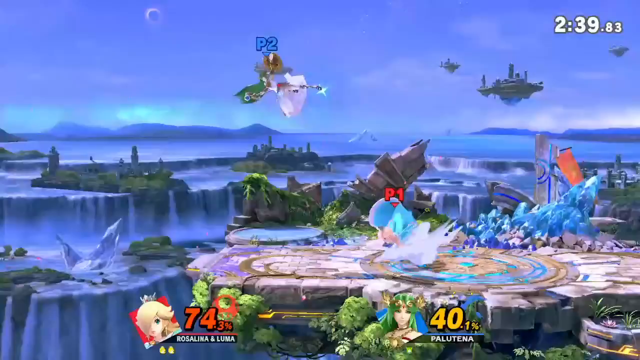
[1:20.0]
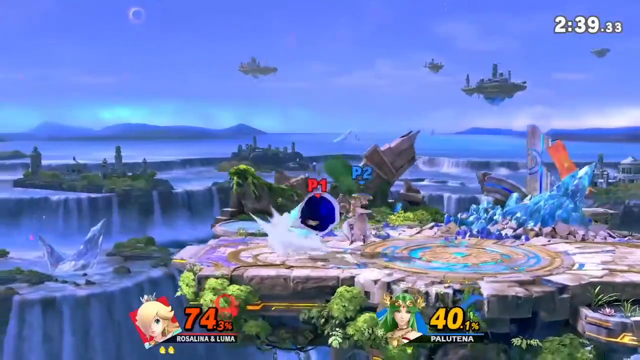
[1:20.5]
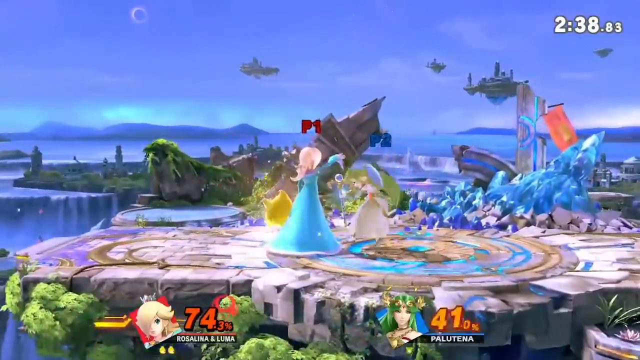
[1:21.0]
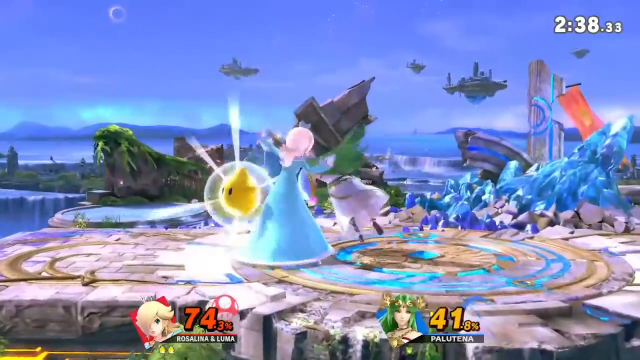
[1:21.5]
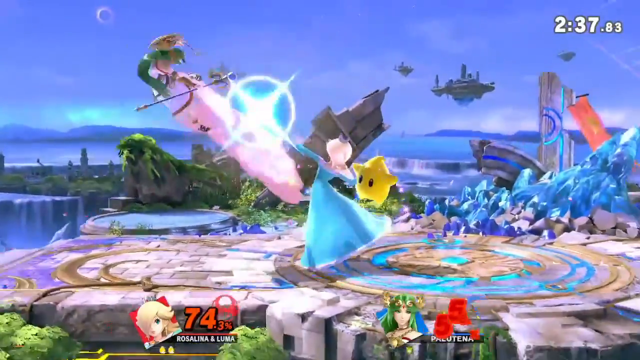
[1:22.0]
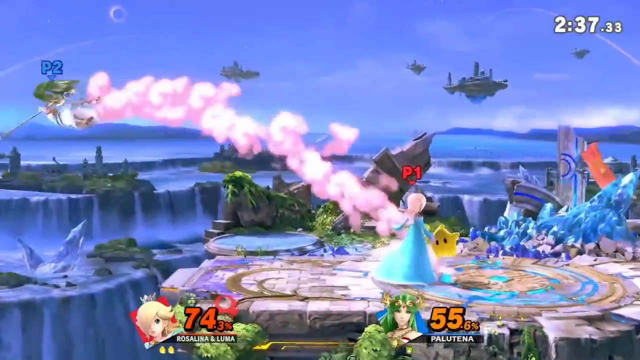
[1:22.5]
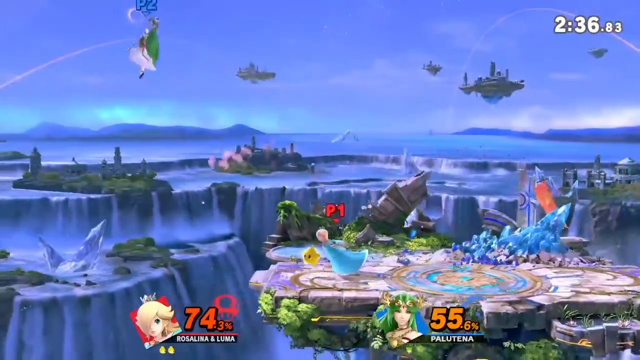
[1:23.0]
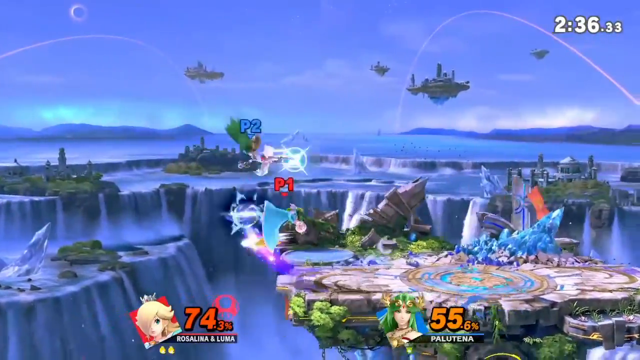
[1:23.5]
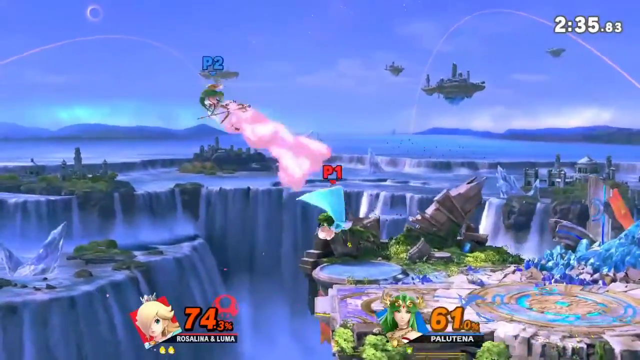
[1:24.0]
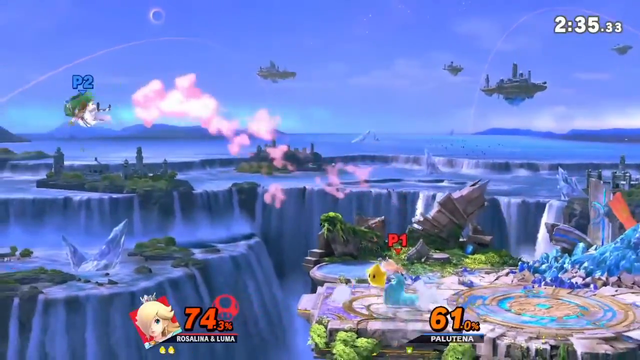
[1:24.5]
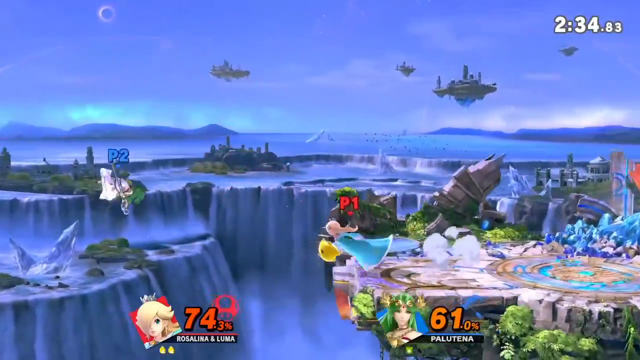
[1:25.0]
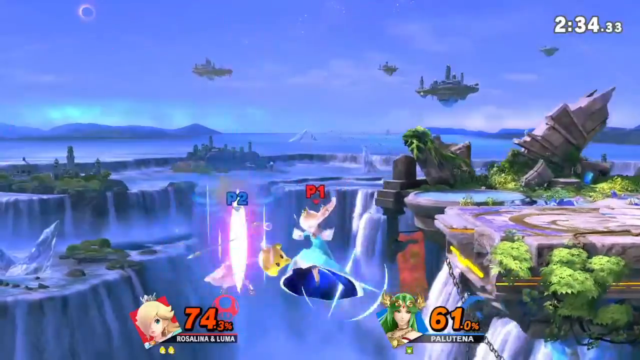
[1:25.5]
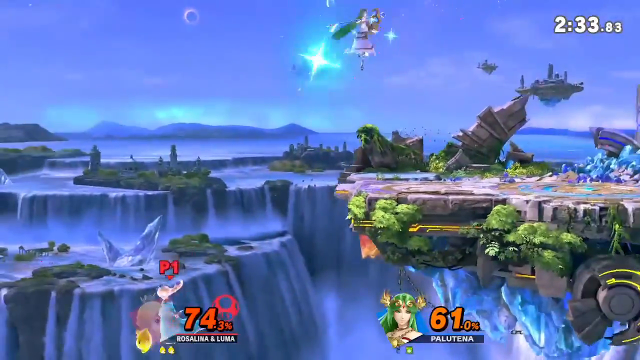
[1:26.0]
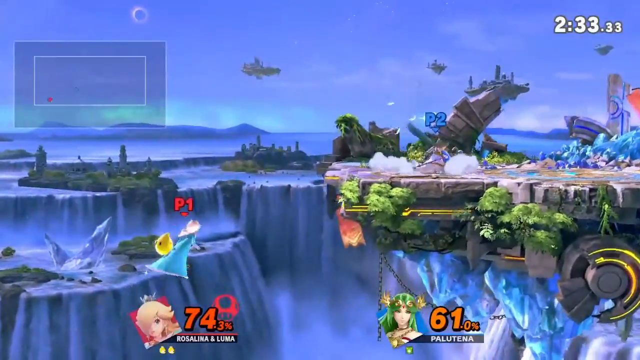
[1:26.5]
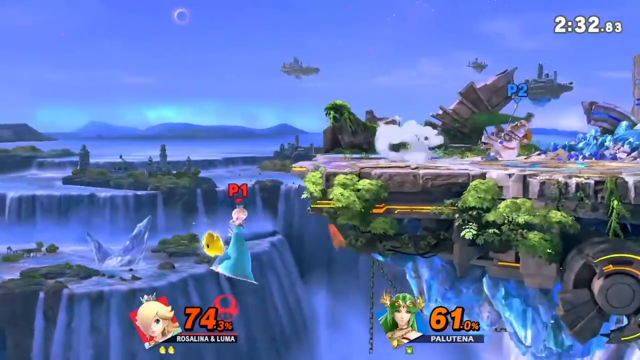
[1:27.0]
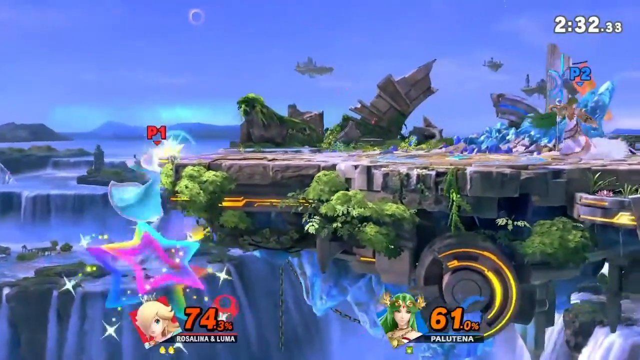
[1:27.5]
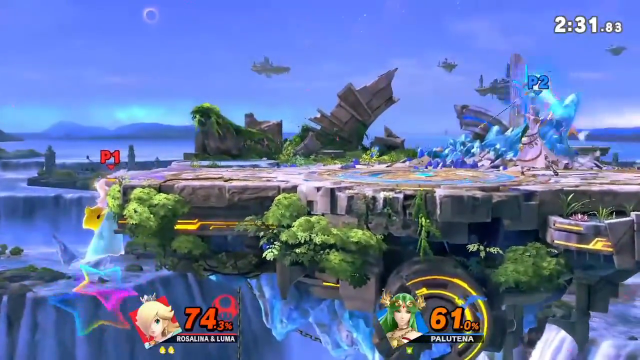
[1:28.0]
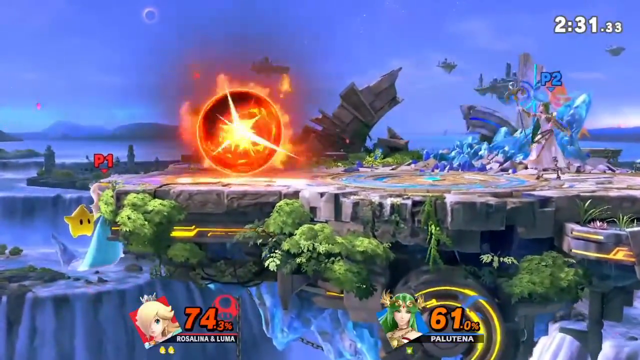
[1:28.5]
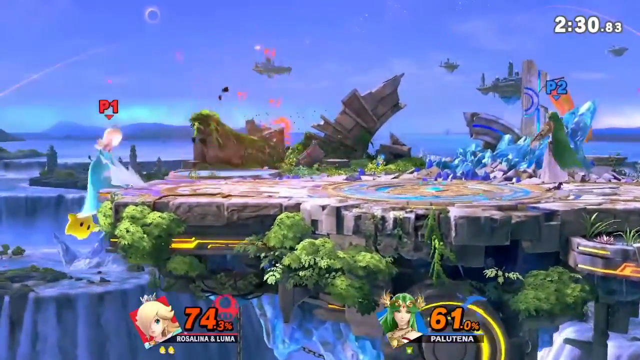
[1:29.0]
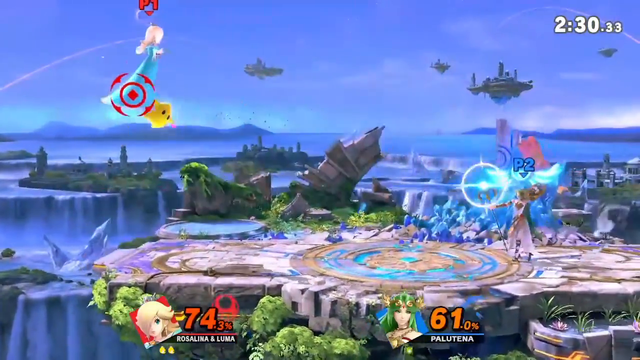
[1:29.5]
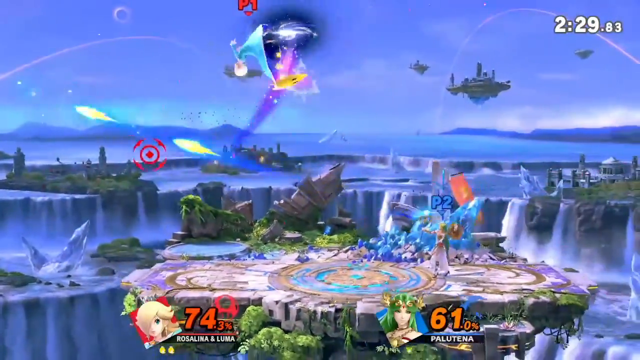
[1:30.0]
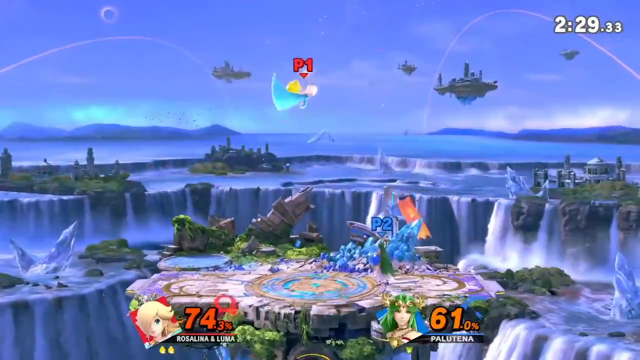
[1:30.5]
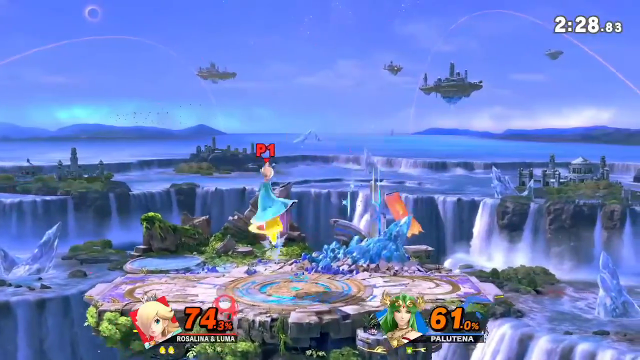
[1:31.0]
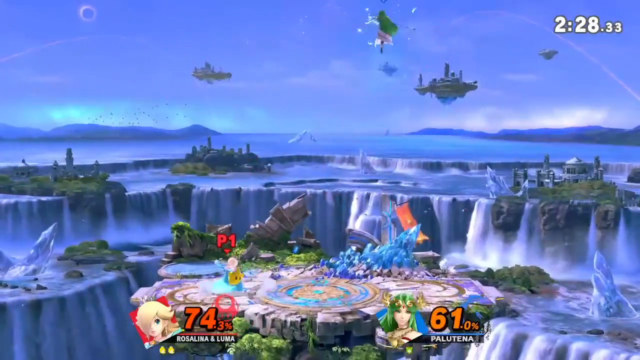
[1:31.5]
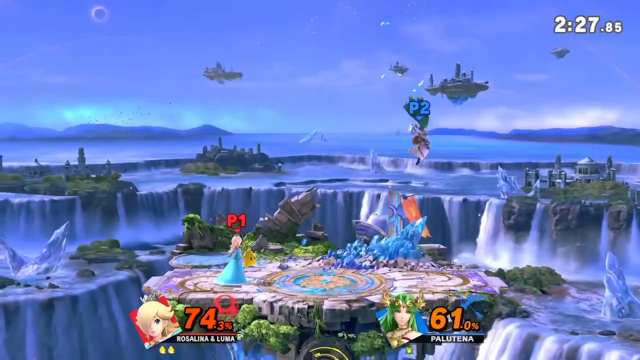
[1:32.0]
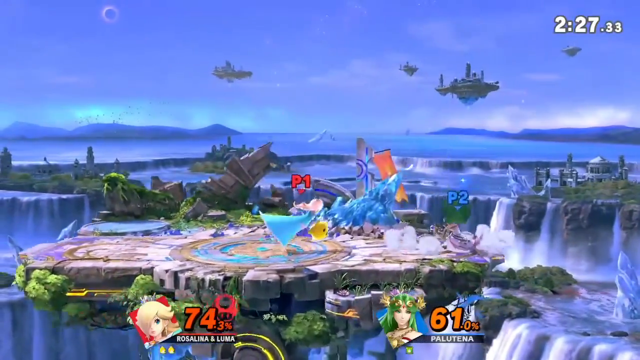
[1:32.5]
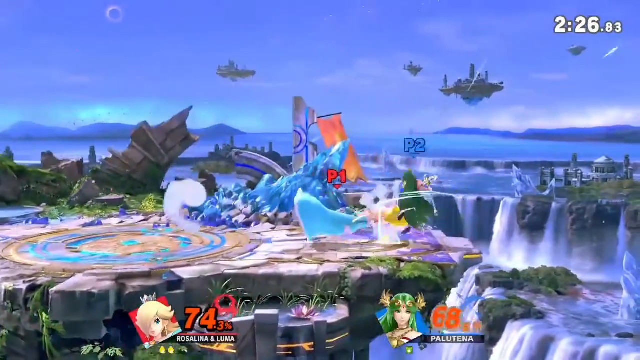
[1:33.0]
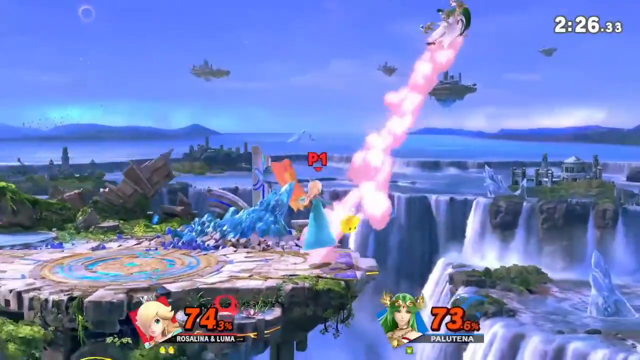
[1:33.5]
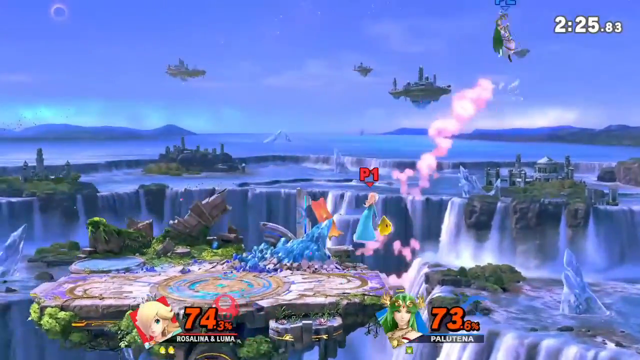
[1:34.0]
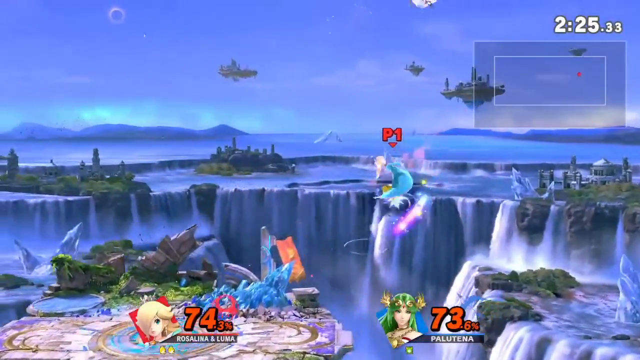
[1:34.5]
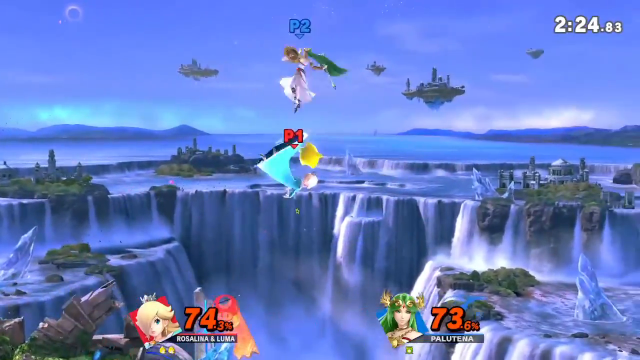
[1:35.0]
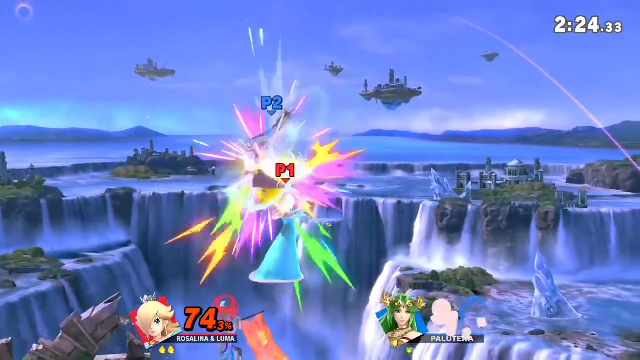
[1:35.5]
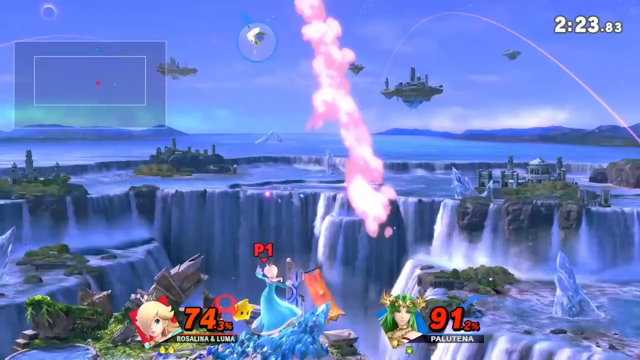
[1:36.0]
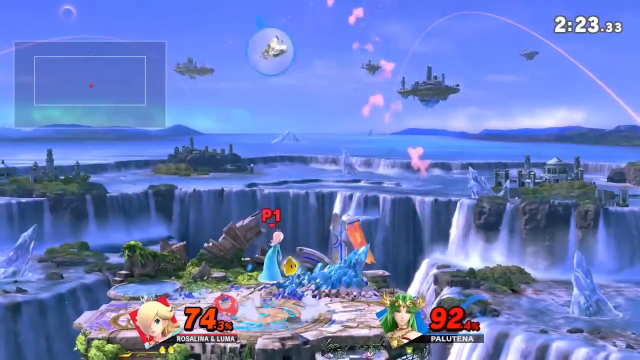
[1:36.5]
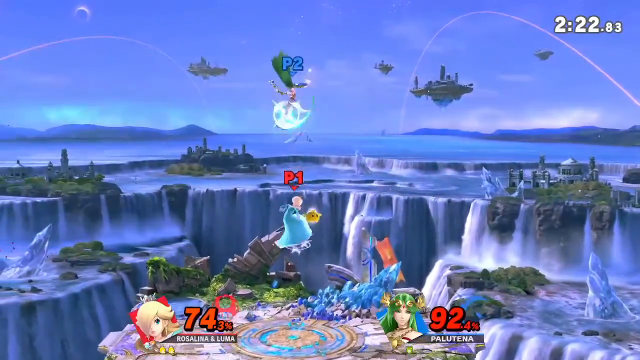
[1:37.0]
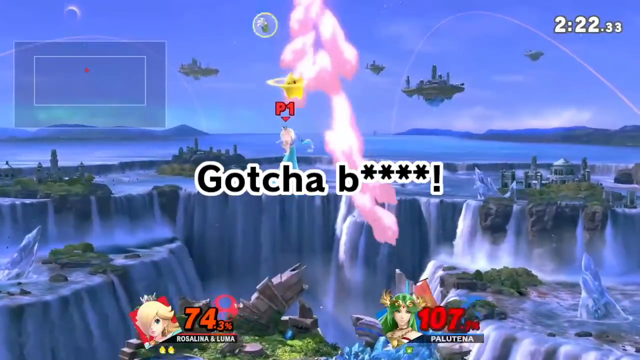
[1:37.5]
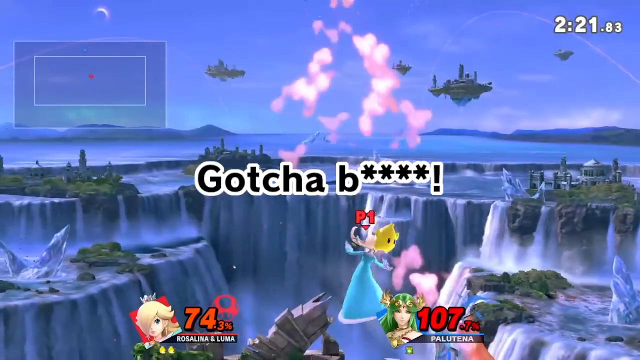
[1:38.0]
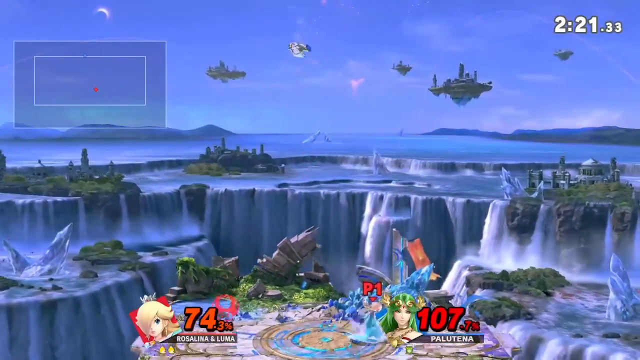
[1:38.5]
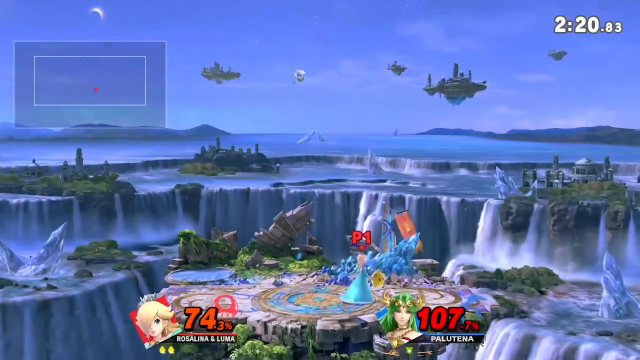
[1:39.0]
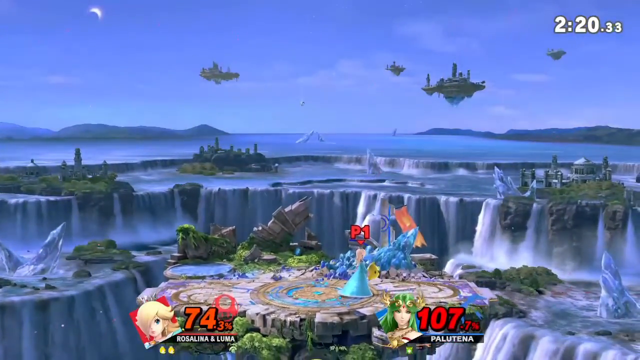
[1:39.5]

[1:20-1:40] The scene is in dusk lighting, with a green shimmery light over the mountains that appears similar to the aurora borealis. A moon is near the top left of the screen, and the trees, waterfalls and mountains in the background are shown in dusk lighting instead of daylight. The timer, in fairly large white numbers in the top right corner of the screen, starts at 2 minutes and 39 seconds. The battle continues, and Rosalina and Luma still appear to be winning. Luma, the star character that accompanies Rosalina, is yellow, whereas earlier she was red at one point. Rosalina lands a large sequence of hits, and the words "got you b****" appear on the screen in large white letters, with the second word censored as a "b" followed by four asterisks.